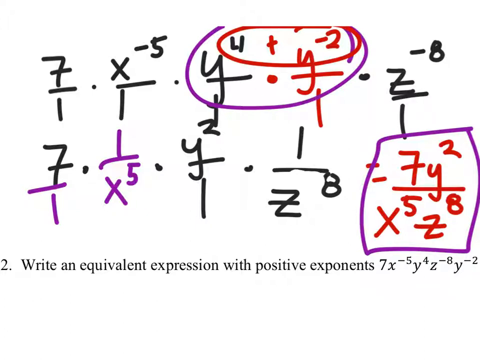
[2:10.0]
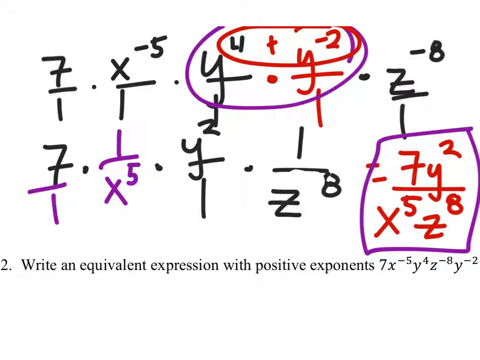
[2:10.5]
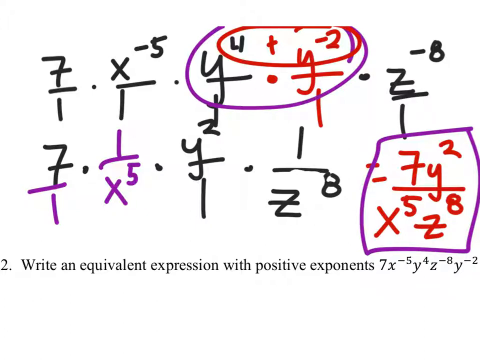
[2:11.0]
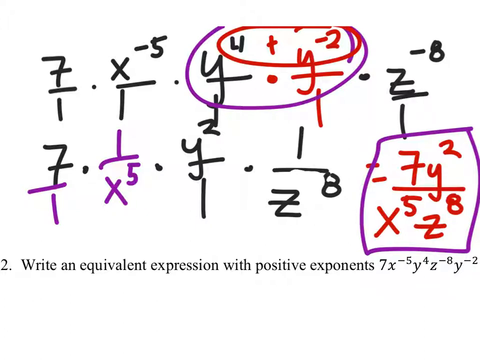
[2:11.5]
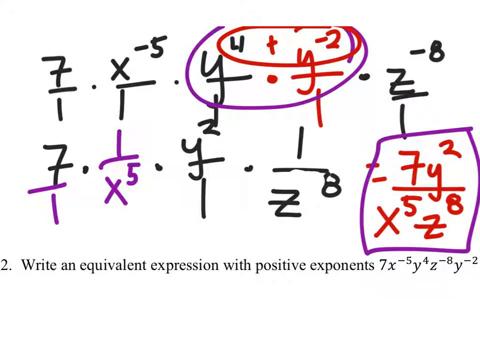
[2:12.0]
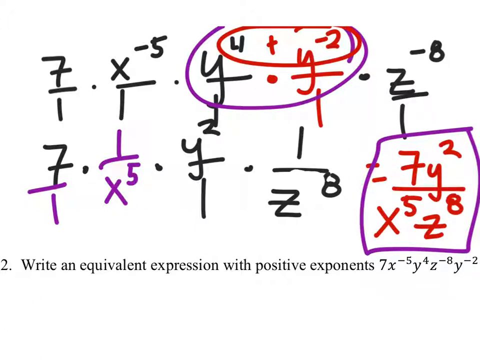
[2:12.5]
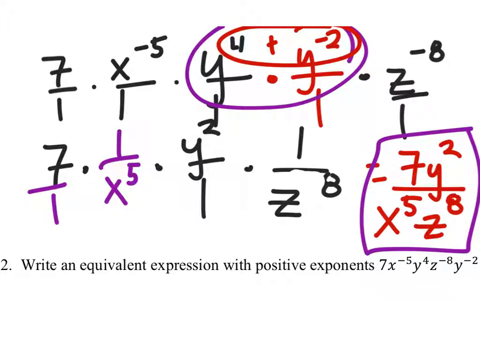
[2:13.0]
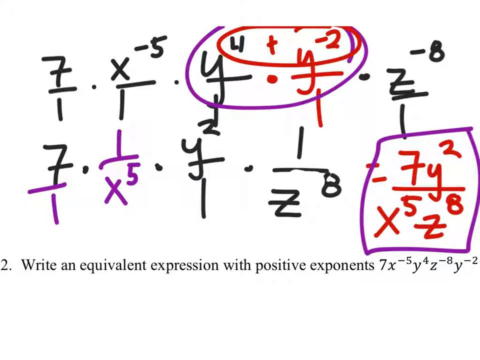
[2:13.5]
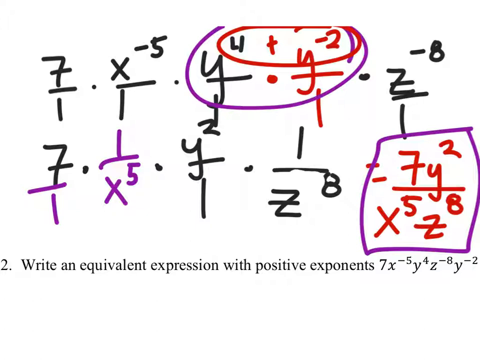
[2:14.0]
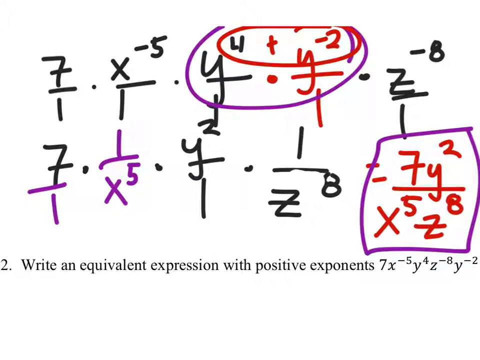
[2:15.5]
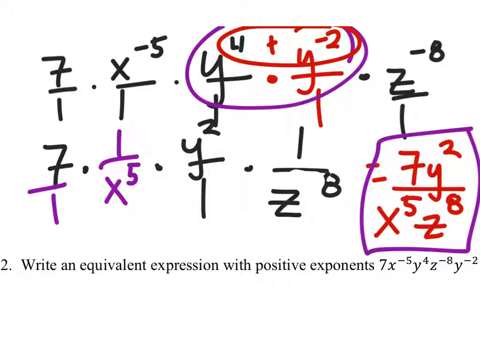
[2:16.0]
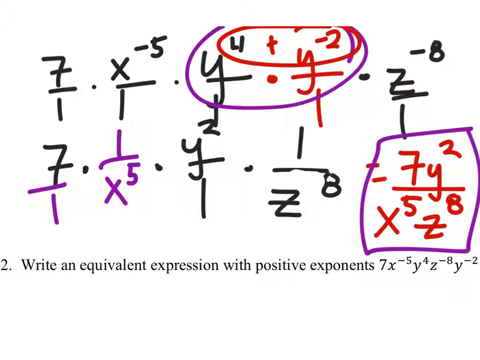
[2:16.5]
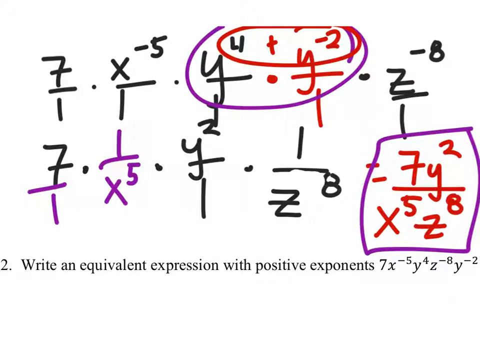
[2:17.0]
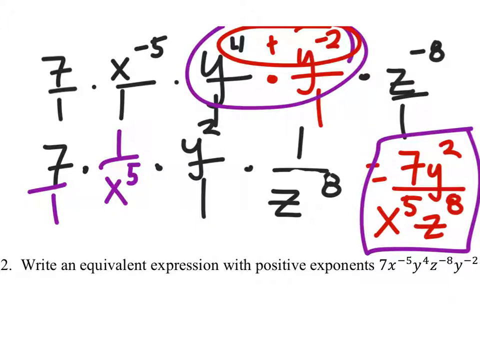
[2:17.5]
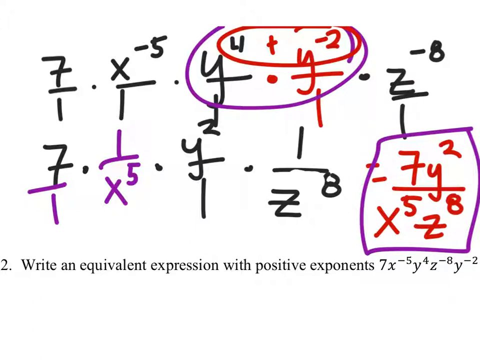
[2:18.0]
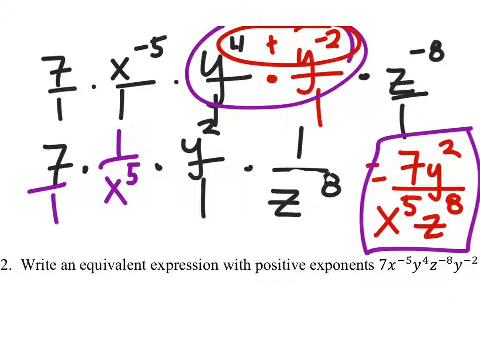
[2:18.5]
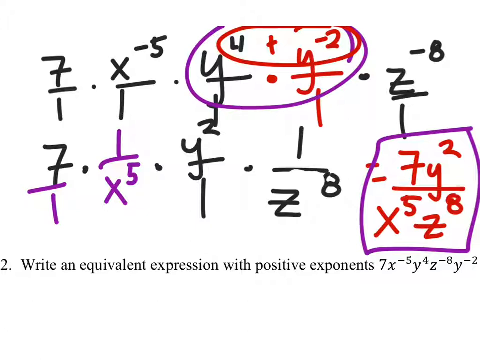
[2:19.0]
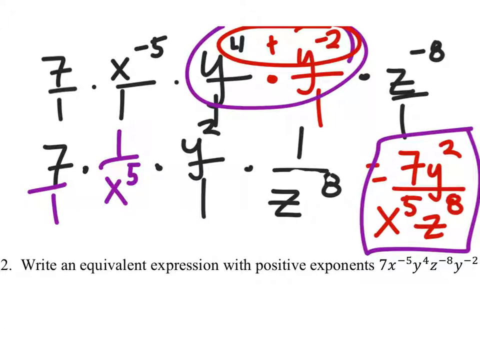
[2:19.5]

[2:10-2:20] Across the top of the screen, in black, is 7 over 1 times x to the negative 5th over 1 times y to the 4th over 1, in red, times y to the negative 2nd over 1, and in black, times z to the negative 8 over 1. A purple circle surrounds the y's and their exponents, and a red circle surrounds the exponents on the y's, also clipping the top half of the red y, with a red plus sign. Beneath that is the rewritten equation: in black, 7, in purple, over 1 times 1 over x to the 5th, then in black, times y to the 2nd over 1 times 1 over z to the 8th, where a minus sign next to the 8 has been erased, cutting into the division bar. In red is equals 7y to the 2nd over x to the 5th z to the 8th, boxed in purple to indicate the correct answer. Typed beneath is bullet point 2 with the equivalent expression task and 7x to the negative 5th, y to the 4th, z to the negative 8, and y to the negative 2. The screen never changes.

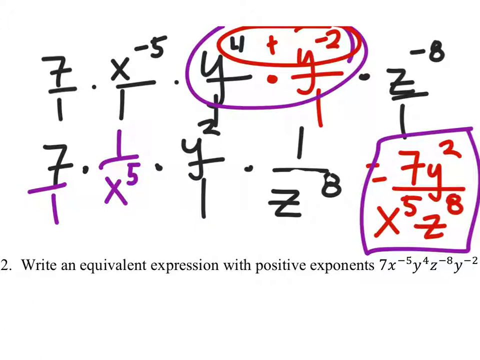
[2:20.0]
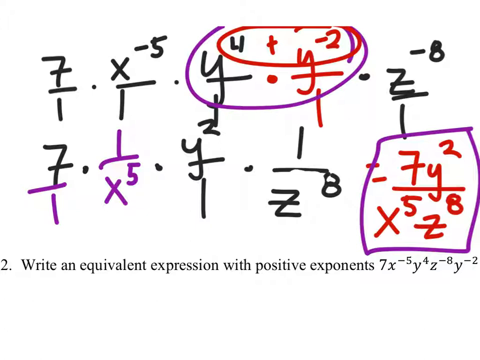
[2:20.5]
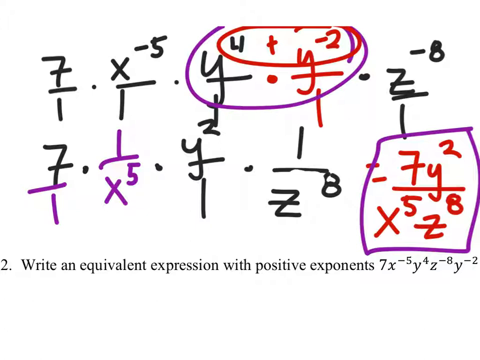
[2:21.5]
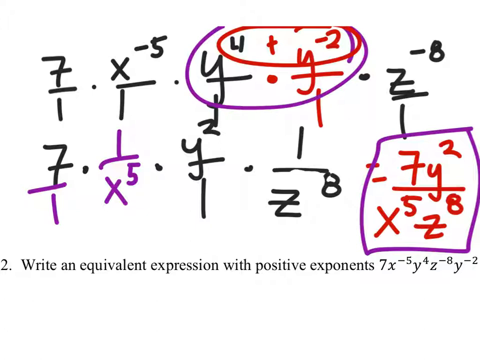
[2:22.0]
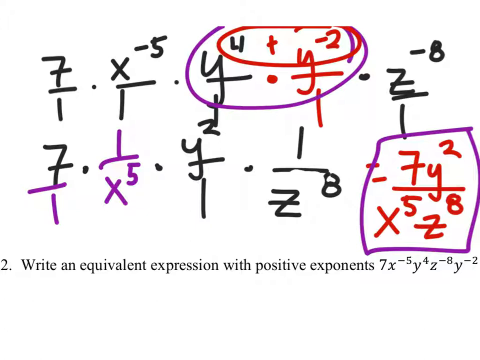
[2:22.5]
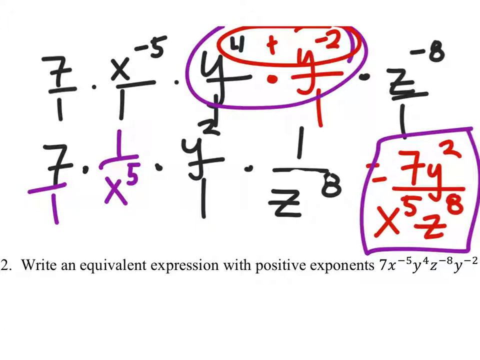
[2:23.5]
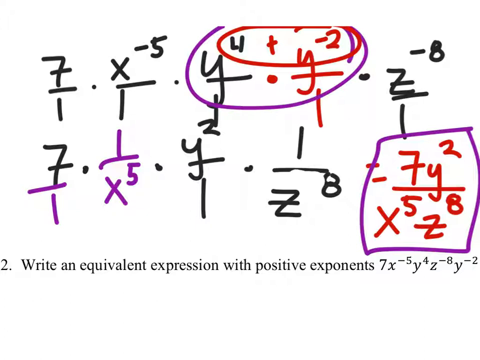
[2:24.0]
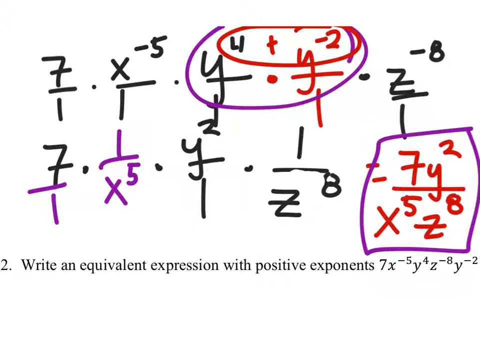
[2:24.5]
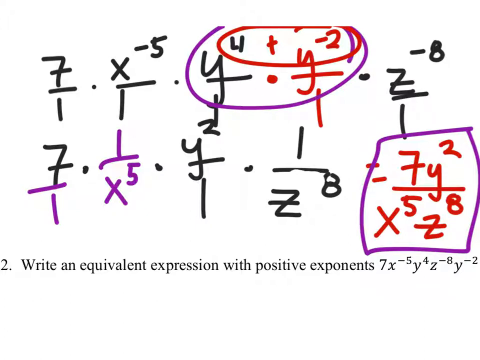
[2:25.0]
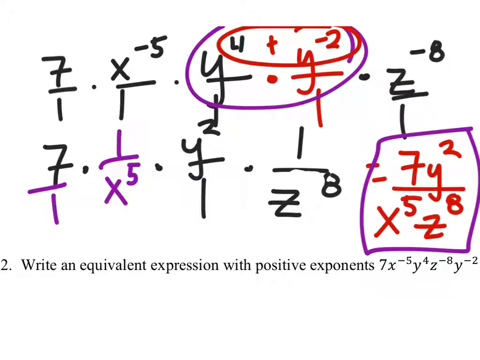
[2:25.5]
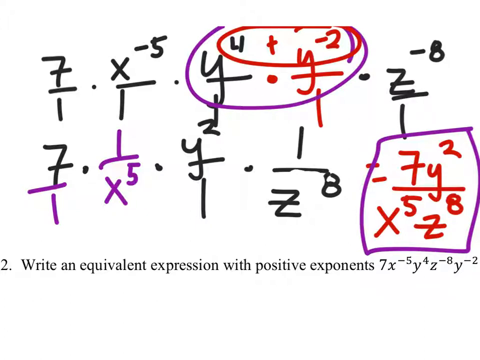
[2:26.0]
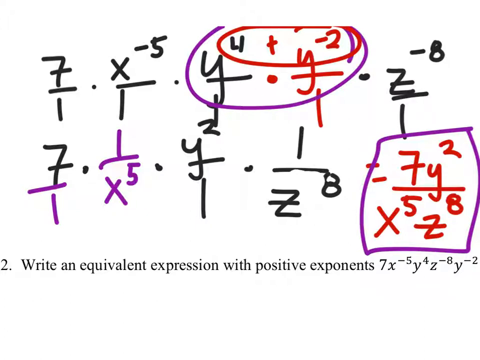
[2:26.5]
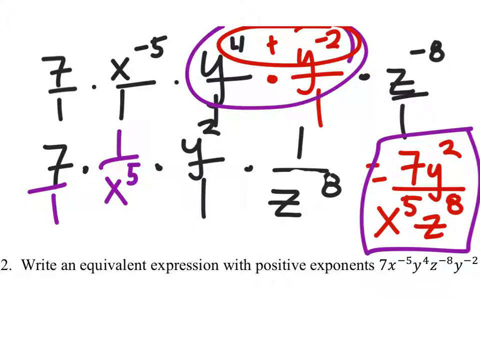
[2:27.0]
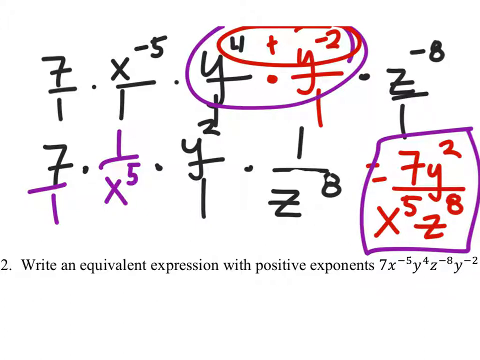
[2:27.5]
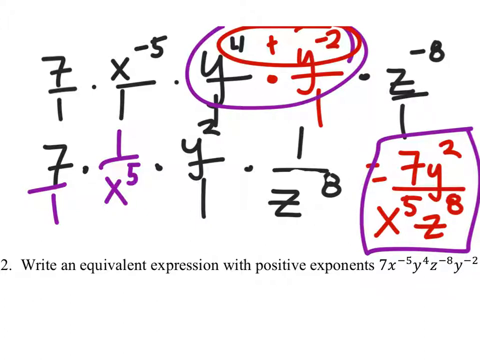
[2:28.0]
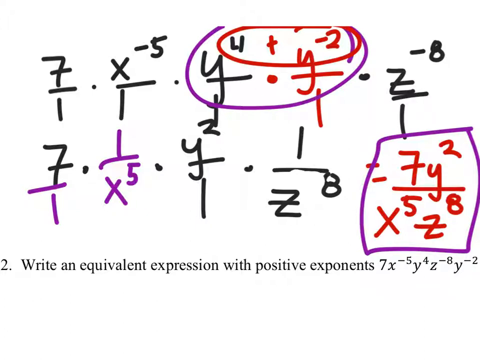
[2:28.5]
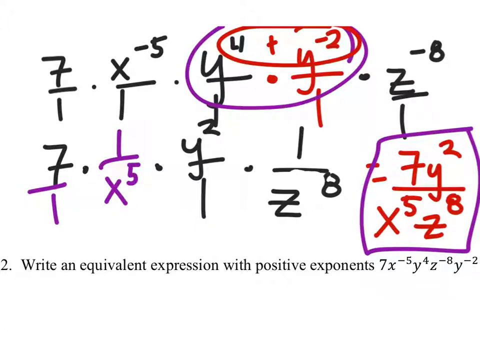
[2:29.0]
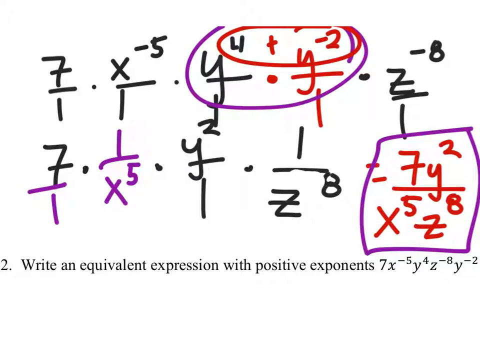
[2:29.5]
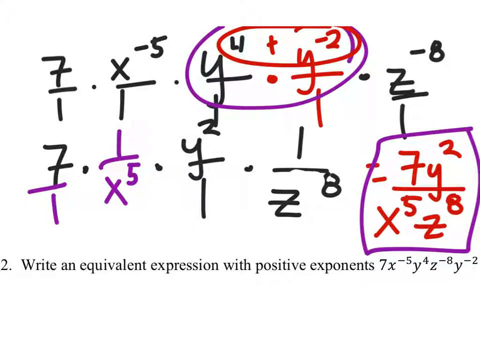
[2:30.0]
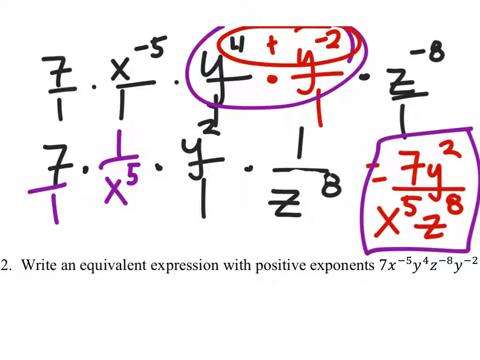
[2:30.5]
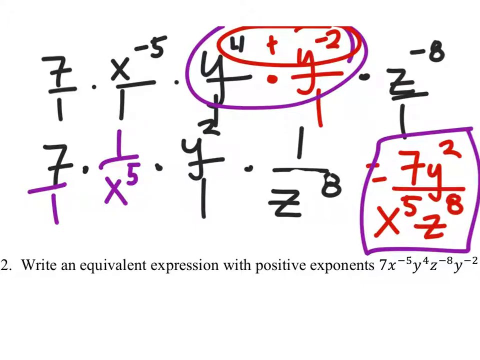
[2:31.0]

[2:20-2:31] The same screen remains: a white board with a gradient to black at the bottom. In black is 7 over 1 times x to the negative 5th over 1 times y to the 4th over 1, in red, times y to the negative 2nd over 1, and in black, times z to the negative 8th over 1. The y's are circled in purple with a single circle encompassing both, and a red circle catches both their exponents and the top half of the red y, with a red plus sign. Beneath that, the rewritten equation reads in black 7, in purple over 1, times 1 over x to the 5th, then in black, times y to the 2nd over 1, times 1 over z to the 8th. The minus sign that the 8 had has been erased, with visible damage to the division bar. In red follows equals 7y squared over x to the 5th z to the 8th, boxed in purple. Beneath that is the typed 2, "write an equivalent expression," positive exponents, 7x to the negative 5th, y to the 4th, z to the negative 8, y to the negative 2.